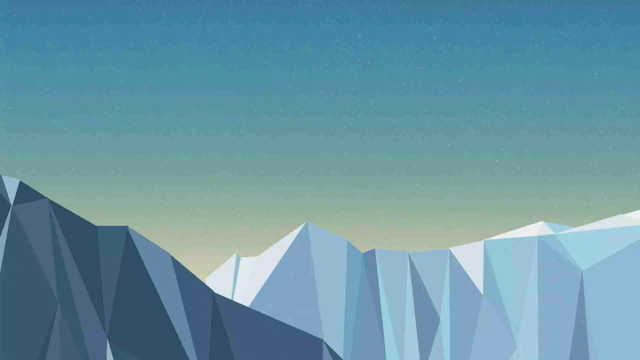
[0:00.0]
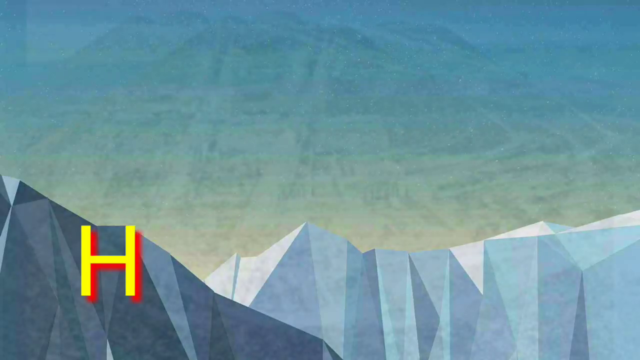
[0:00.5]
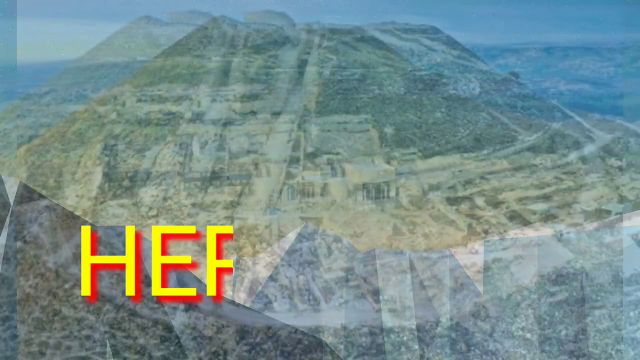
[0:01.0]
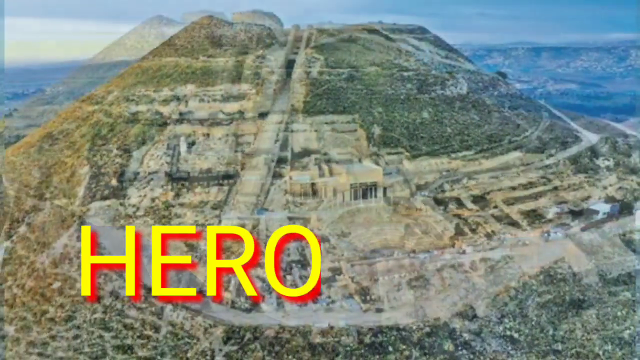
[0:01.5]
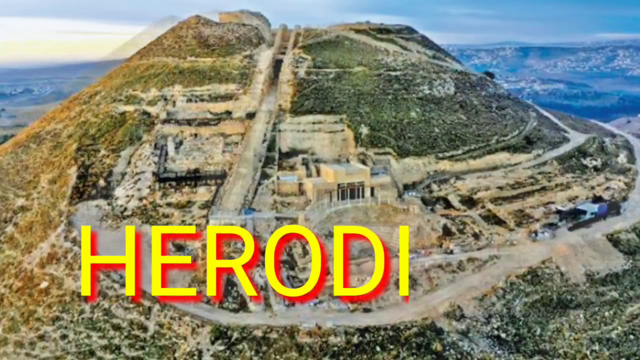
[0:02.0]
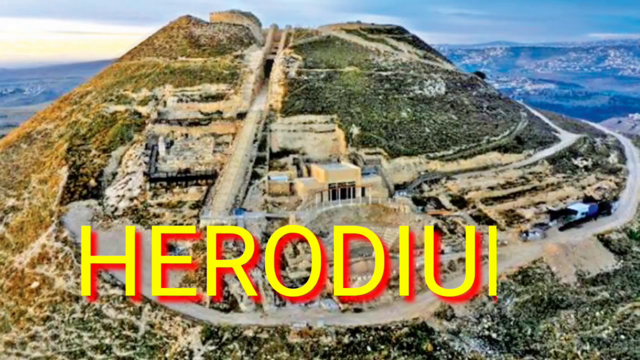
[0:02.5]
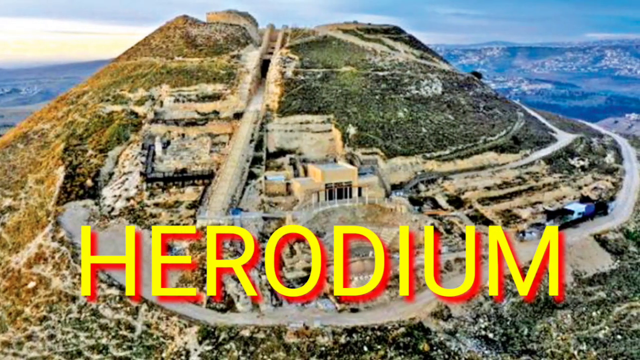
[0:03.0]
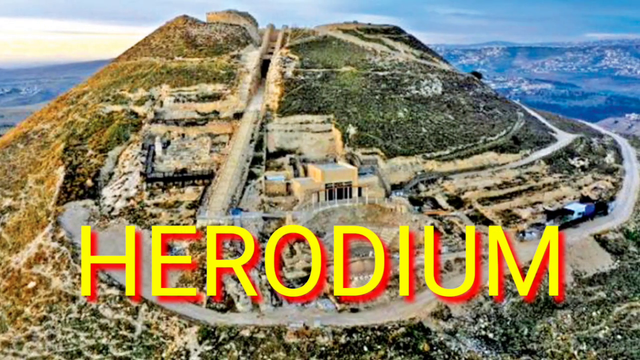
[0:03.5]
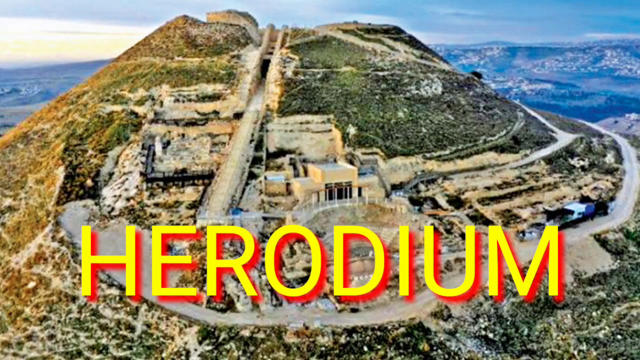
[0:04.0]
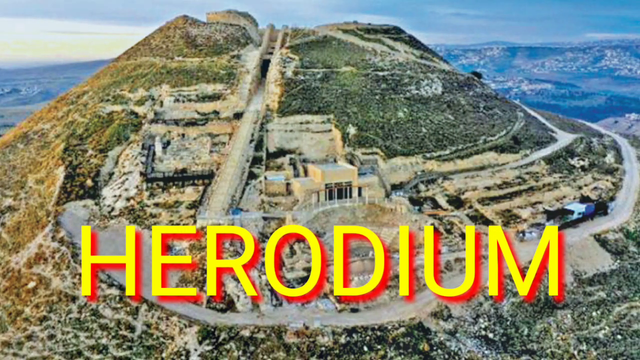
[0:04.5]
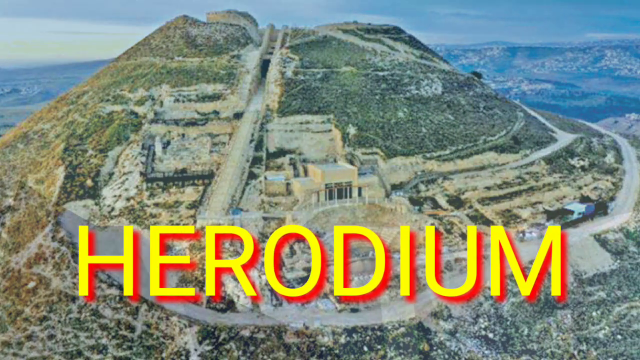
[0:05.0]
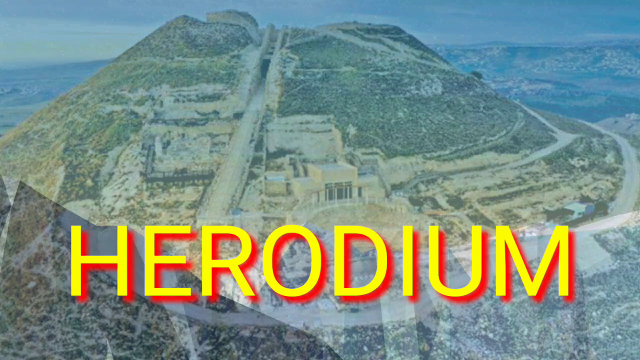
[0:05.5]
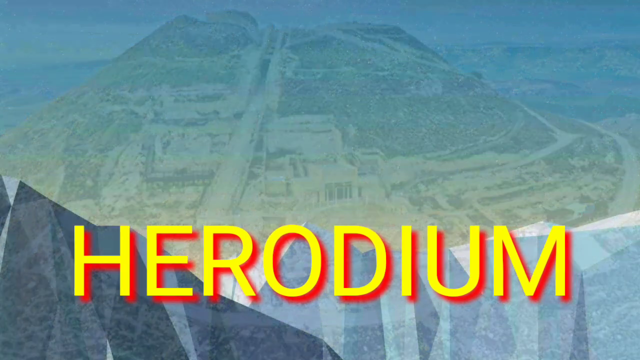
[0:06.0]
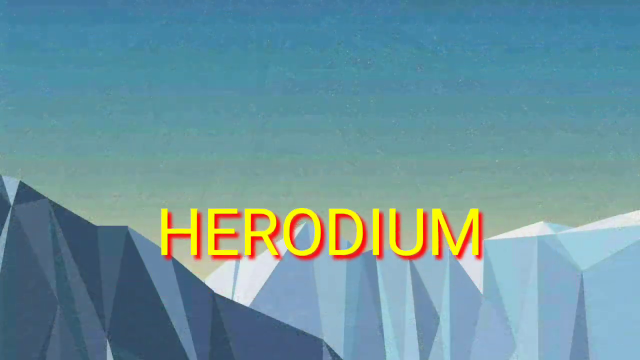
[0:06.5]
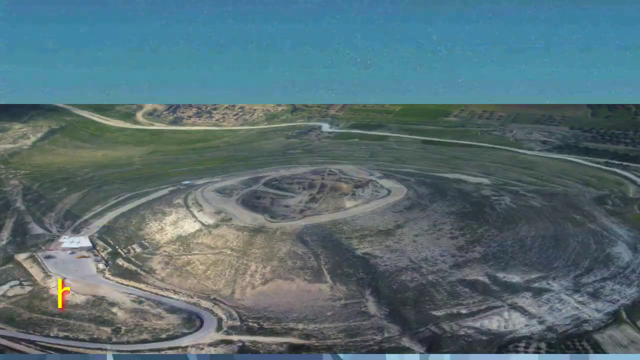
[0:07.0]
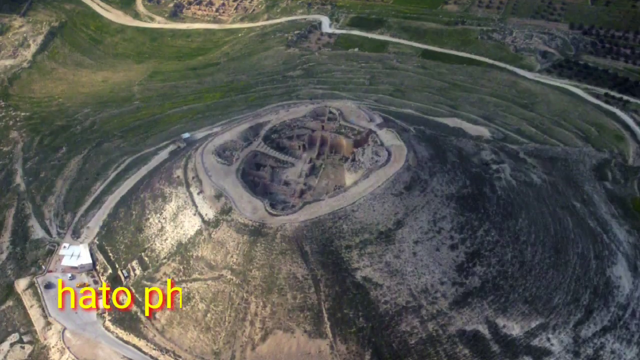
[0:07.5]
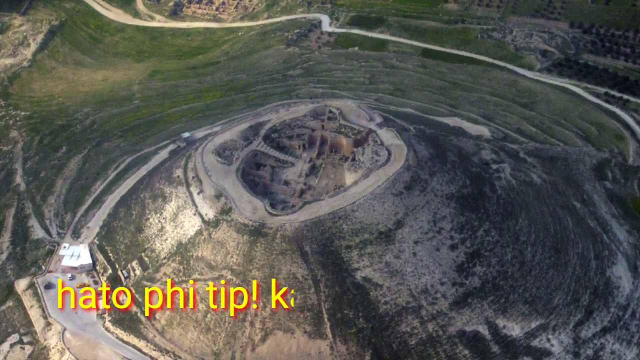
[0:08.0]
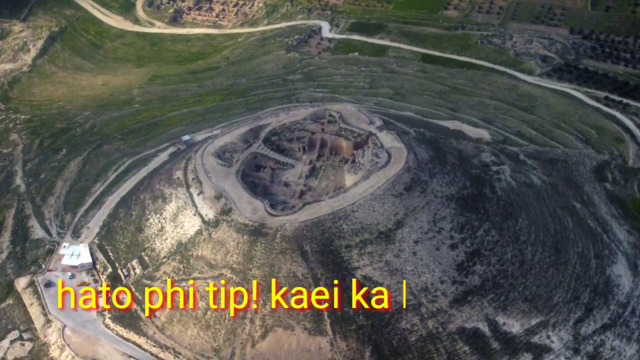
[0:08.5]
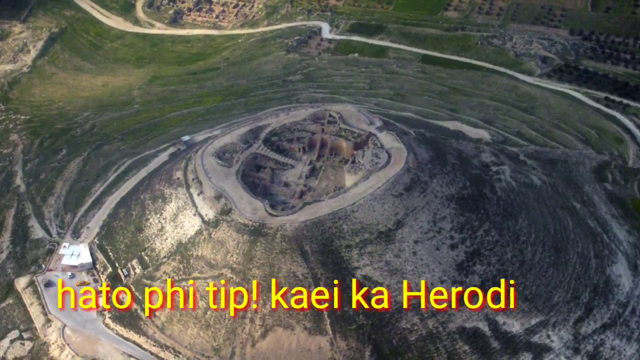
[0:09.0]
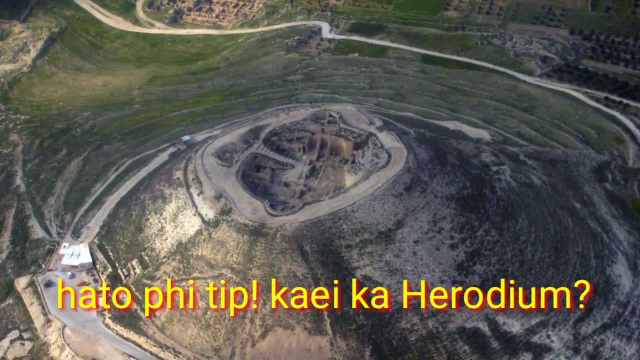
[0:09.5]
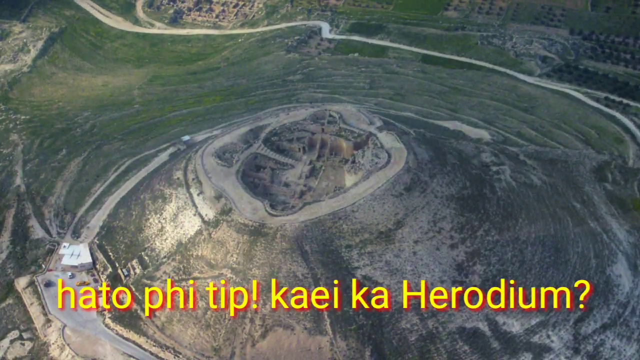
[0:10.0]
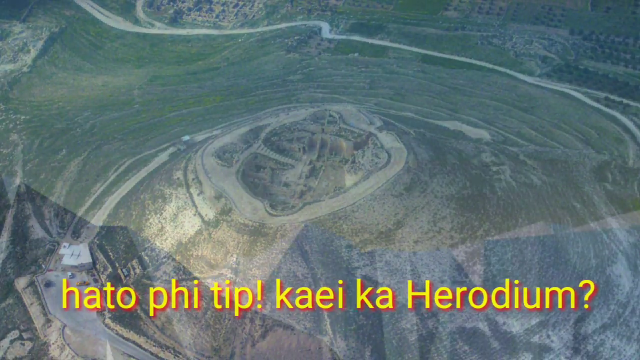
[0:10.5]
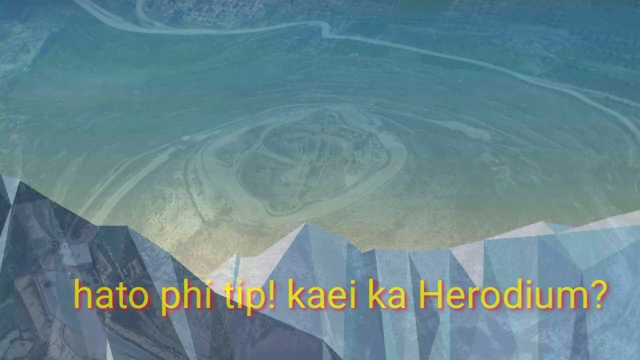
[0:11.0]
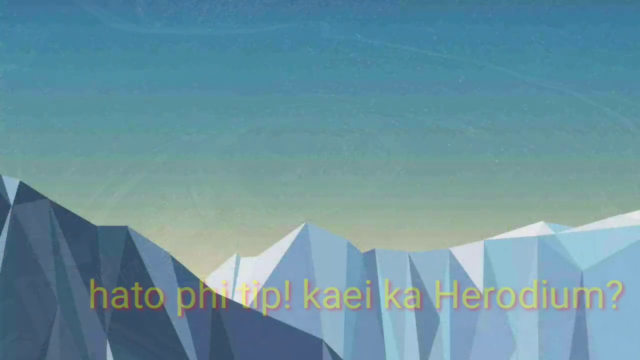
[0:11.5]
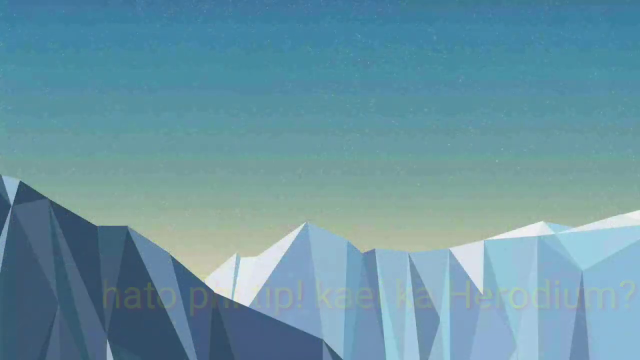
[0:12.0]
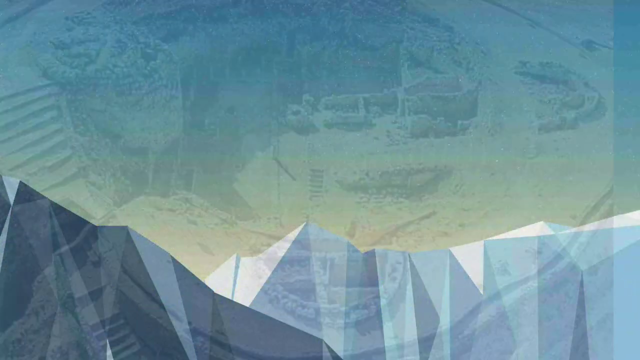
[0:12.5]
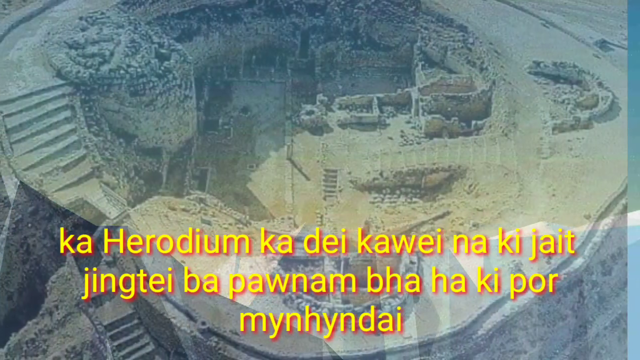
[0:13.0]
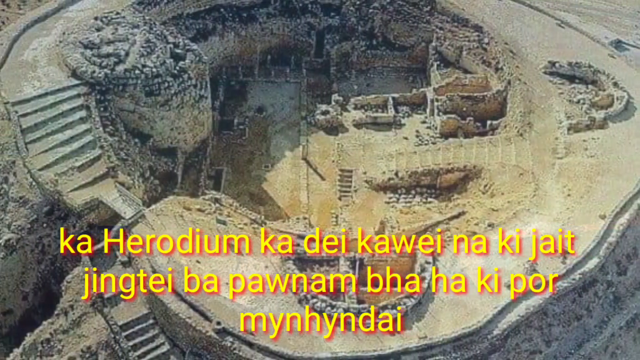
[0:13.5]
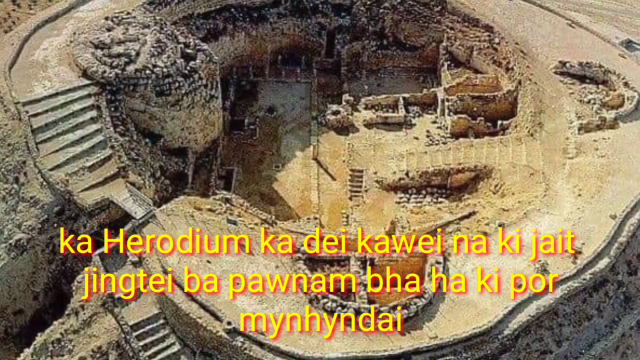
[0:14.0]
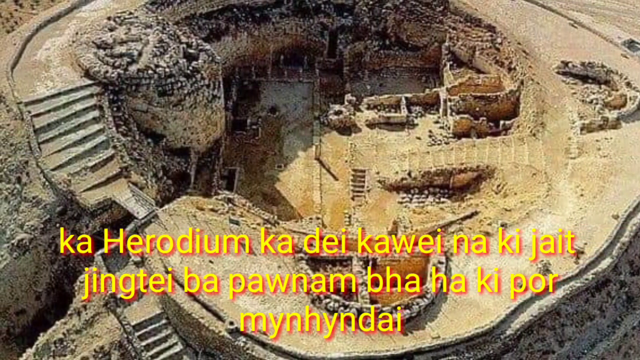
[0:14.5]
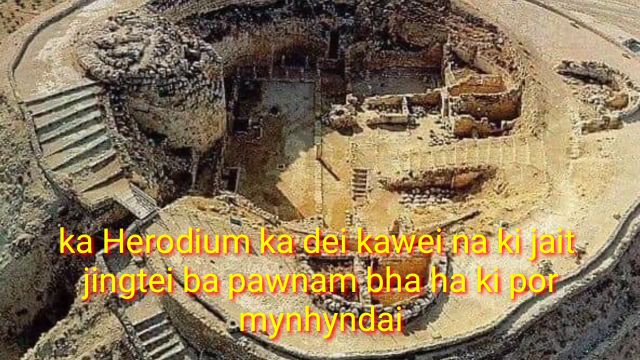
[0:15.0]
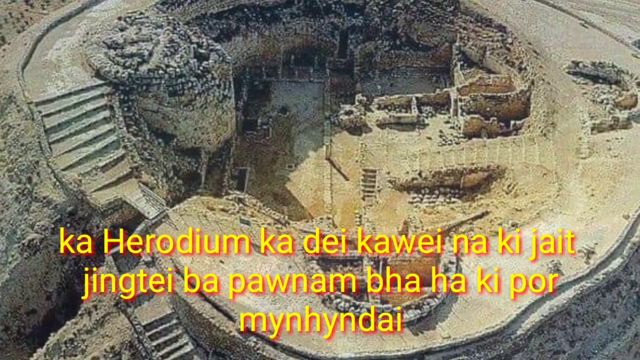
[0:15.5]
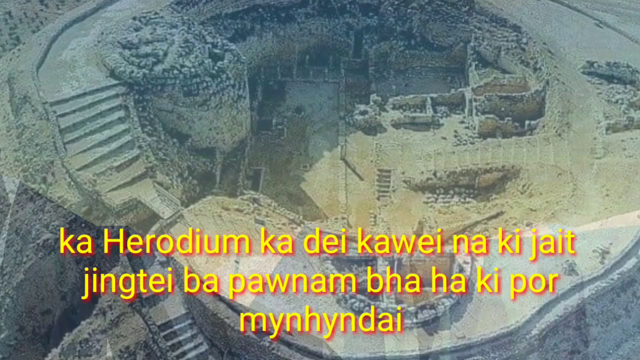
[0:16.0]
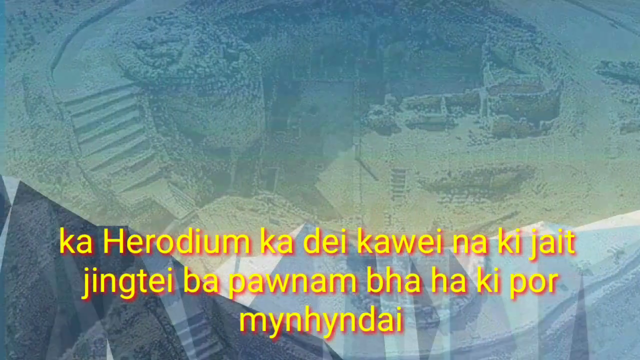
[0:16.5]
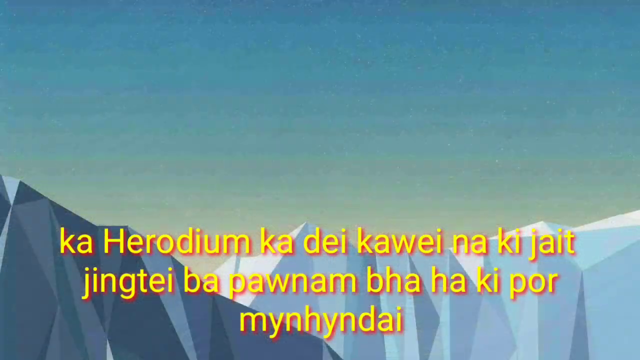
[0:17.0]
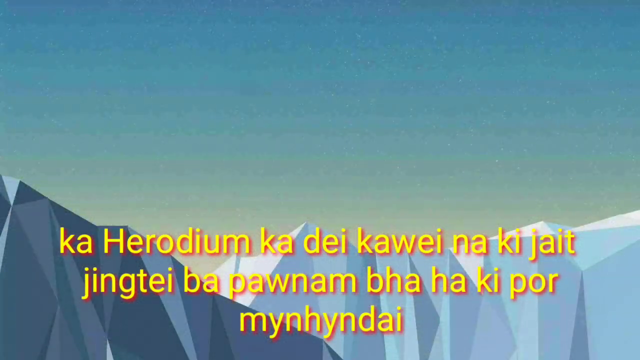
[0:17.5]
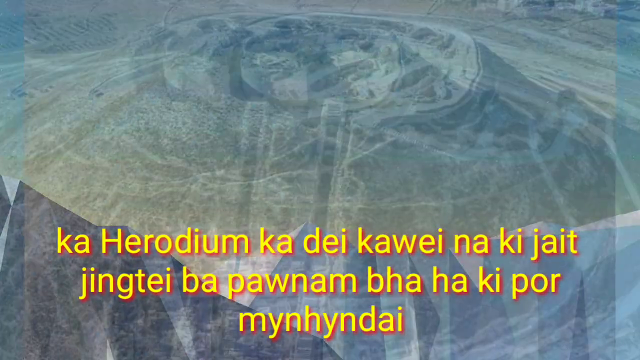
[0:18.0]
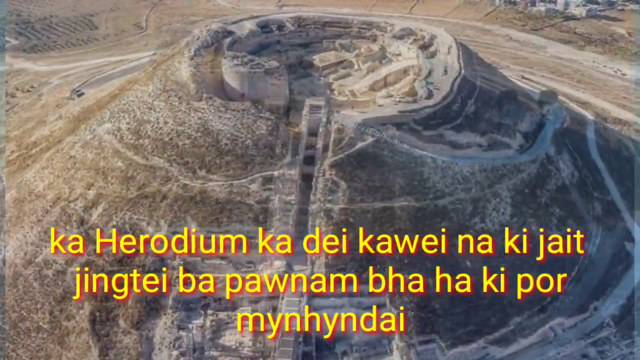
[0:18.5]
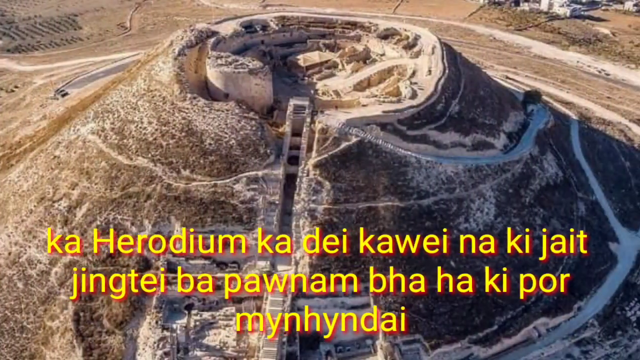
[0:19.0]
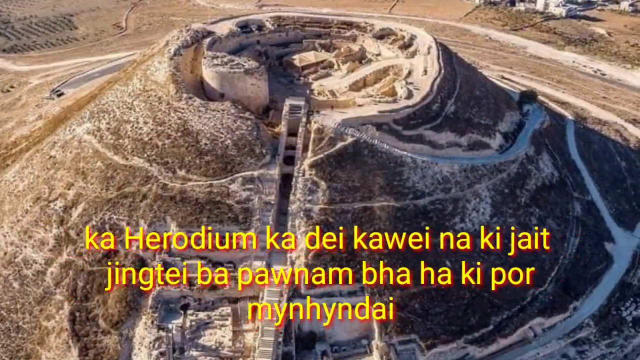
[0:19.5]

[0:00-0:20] The video opens with images of what appears to be a large structure built into a hill or mountain. Words appear on the screen spelling out "Herodium" in yellow and red. The word goes away and a new image appears, with more text scrolling at the bottom of the screen in a language other than English, in the same red and yellow color scheme. The image shows a structure built into the top of a big hill. It fades away and a new image appears, apparently the same structure on top of the hill but now in close-up, again with non-English text in the same red and yellow colors.